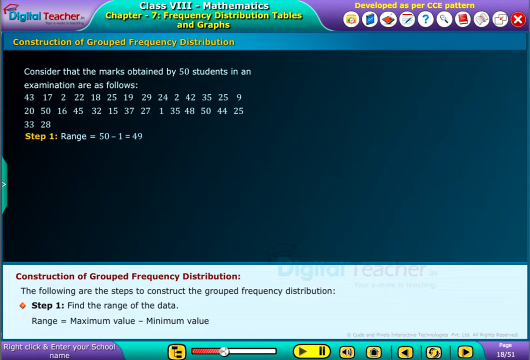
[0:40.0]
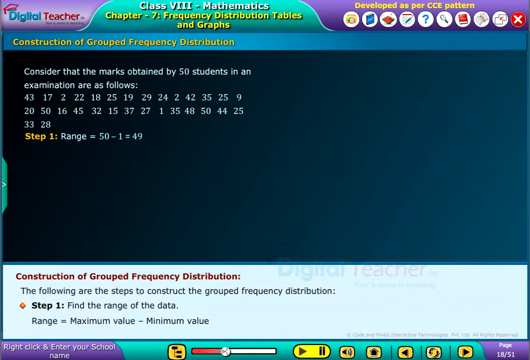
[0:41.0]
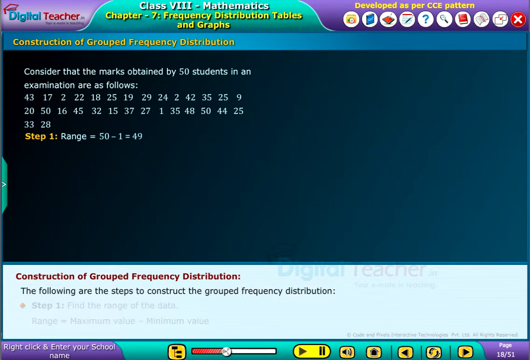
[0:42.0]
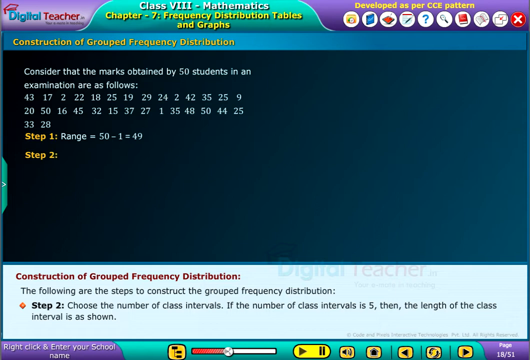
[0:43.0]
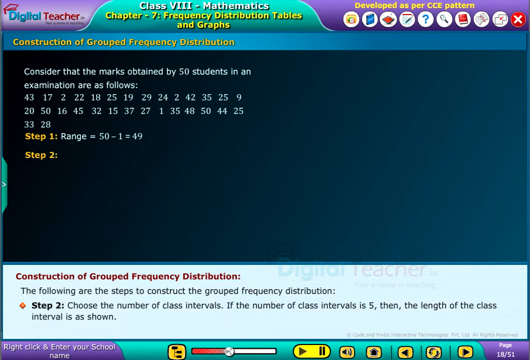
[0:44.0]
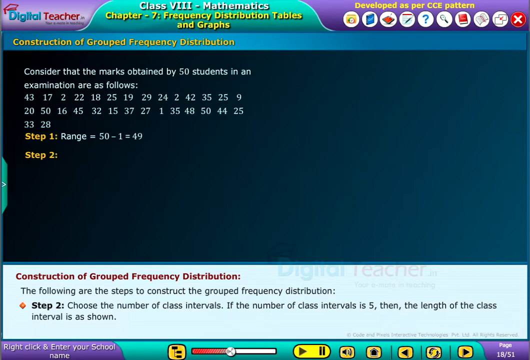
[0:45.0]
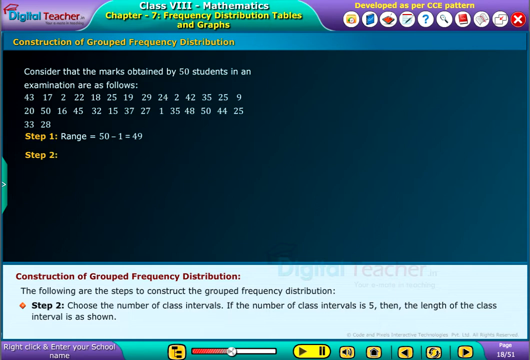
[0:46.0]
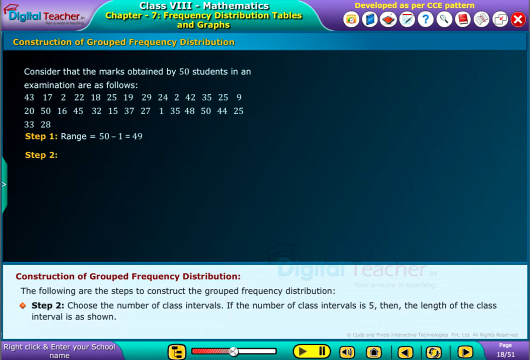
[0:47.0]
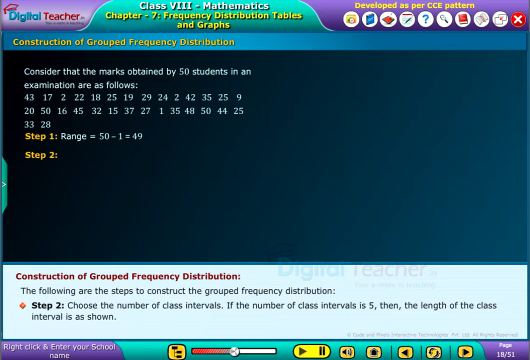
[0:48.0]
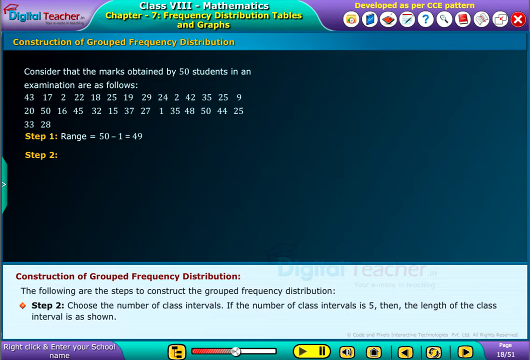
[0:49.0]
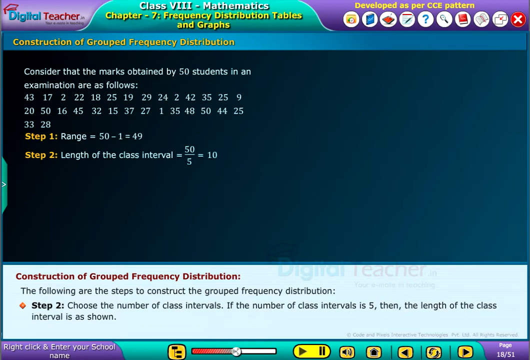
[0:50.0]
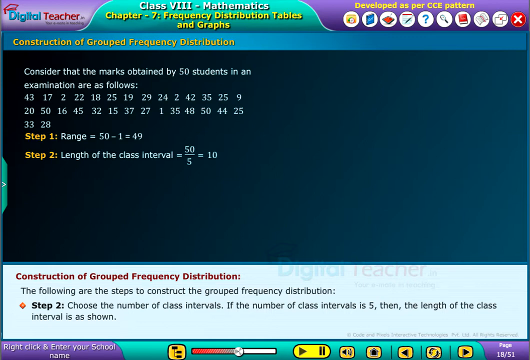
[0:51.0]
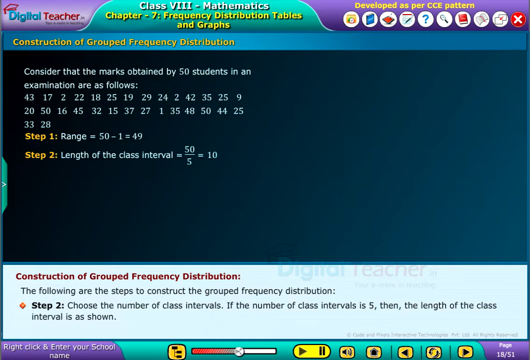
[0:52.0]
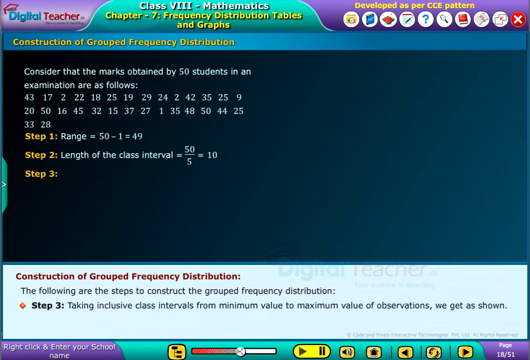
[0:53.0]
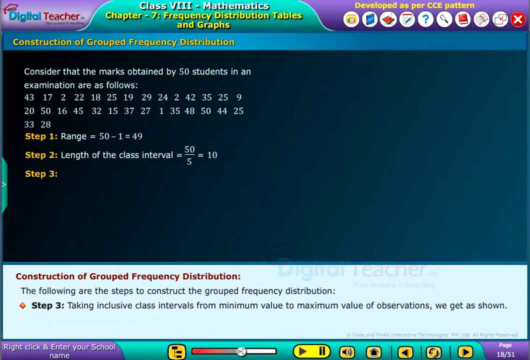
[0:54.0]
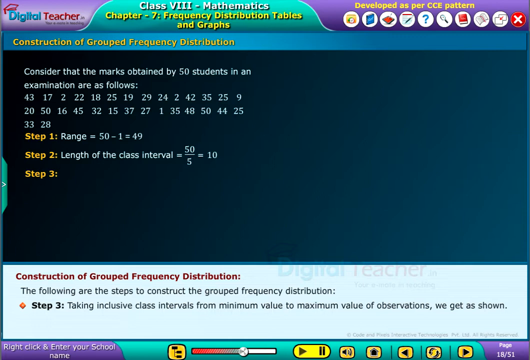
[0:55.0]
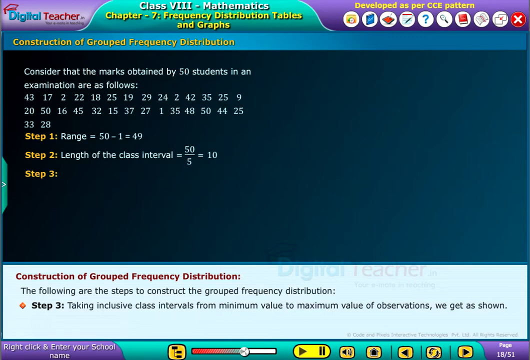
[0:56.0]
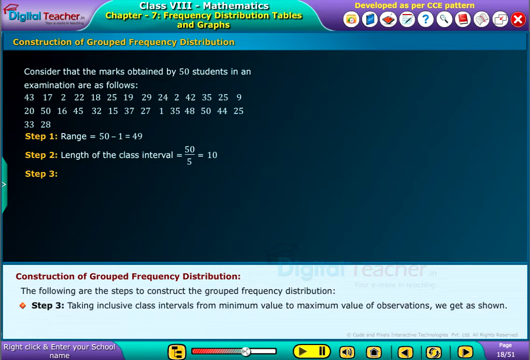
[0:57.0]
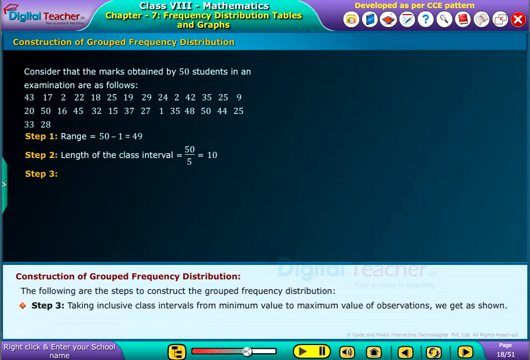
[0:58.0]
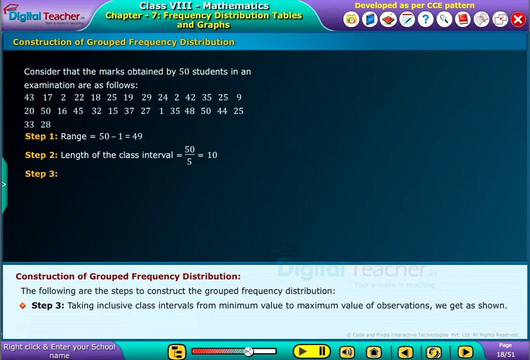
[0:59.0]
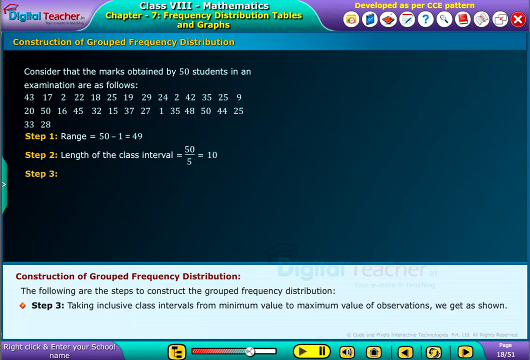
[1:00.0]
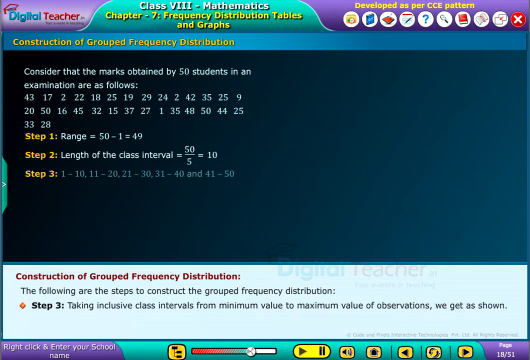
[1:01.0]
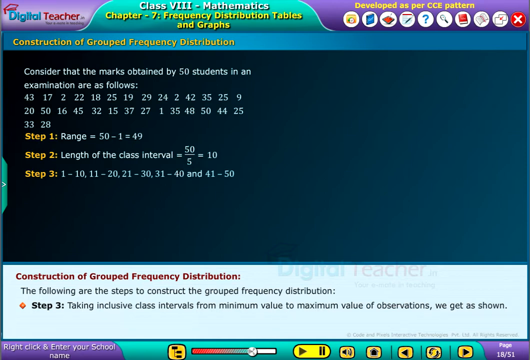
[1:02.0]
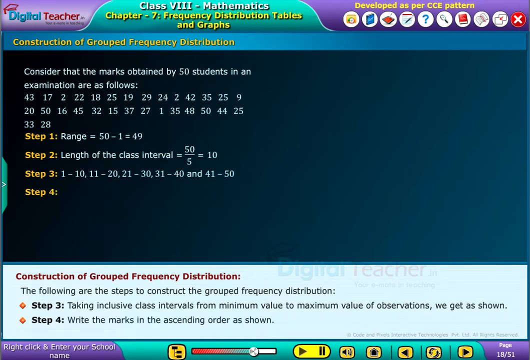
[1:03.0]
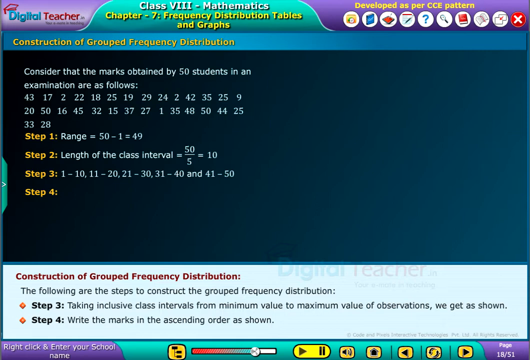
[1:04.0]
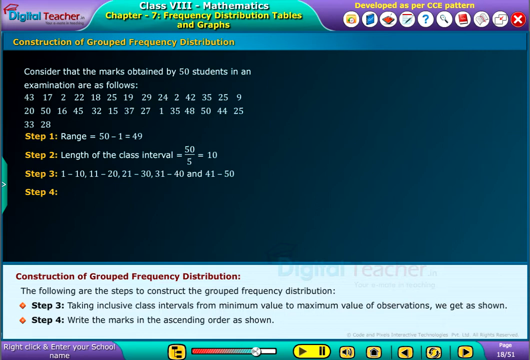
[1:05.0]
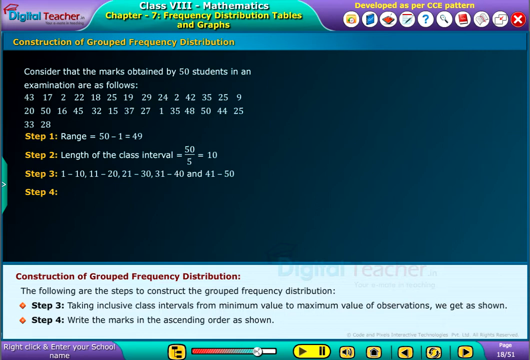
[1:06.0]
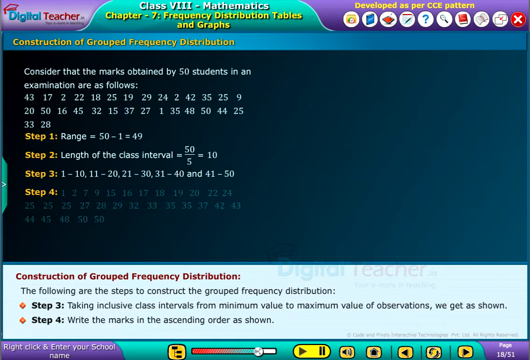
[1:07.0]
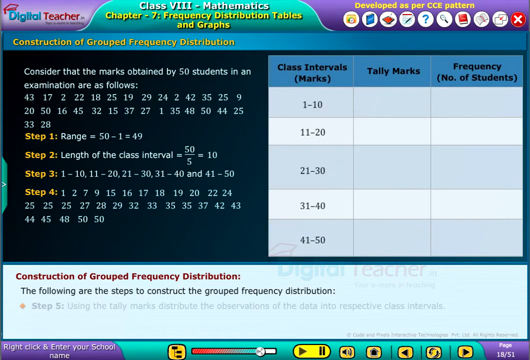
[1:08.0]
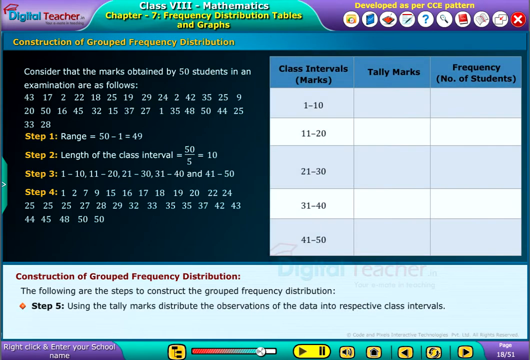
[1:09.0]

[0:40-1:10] A slide, apparently for a math class, shows "digital teacher" in the top left. Next to it is a teal, folder-tab-style graphic reading "class VIII" in Roman numerals and "mathematics" in white text against the teal background, and beneath that "chapter 7 frequency distribution tables and graphs" in yellow text. To the right of this, against a purple background, are a number of circular icons that look like they can be clicked for further information. The slide reads "consider that the marks obtained by 50 students in an examination are as follows" in bluish-whitish text against a very dark blue or dark teal background, followed by a string of numbers that fall between 1 and 50. Then "step 1" appears in yellow: "range 50 - 1 = 49". After a momentary pause, step 2 appears: "length of the class interval = 50/5 = 10". Step 3 follows, again in yellow, listing intervals beginning "1 to 10, 11 to 20," and ending "31 to 40 and 41 to 50". Step 4 then arrives and shows a string of numbers, and a table appears on the right side.